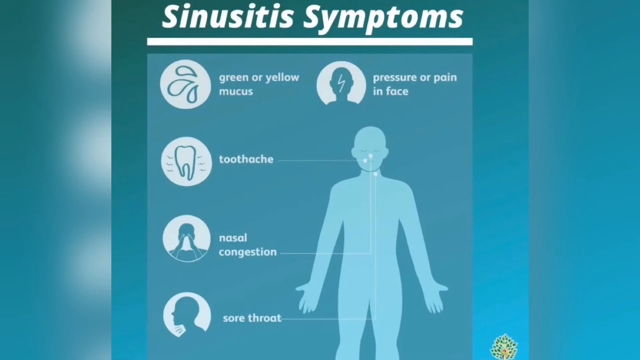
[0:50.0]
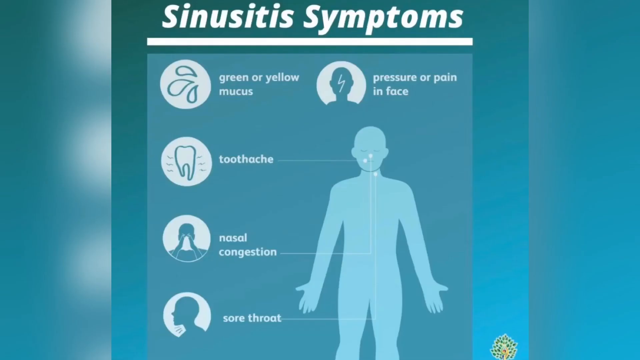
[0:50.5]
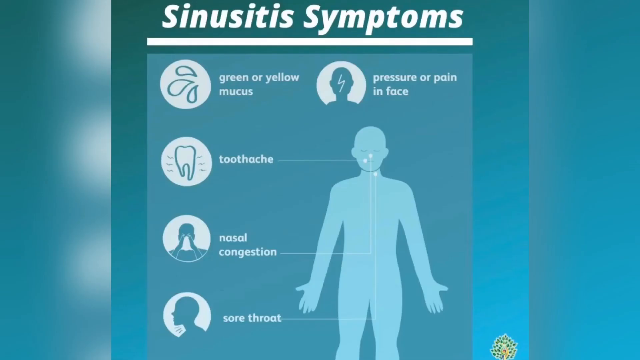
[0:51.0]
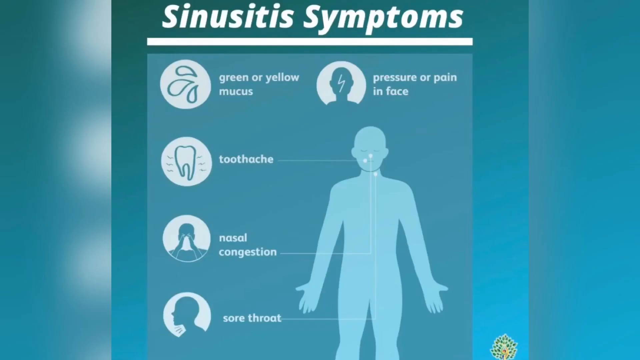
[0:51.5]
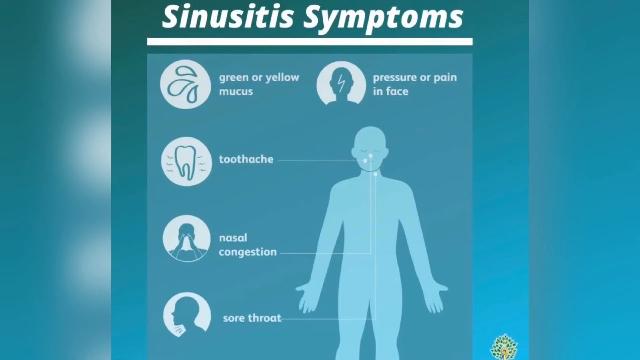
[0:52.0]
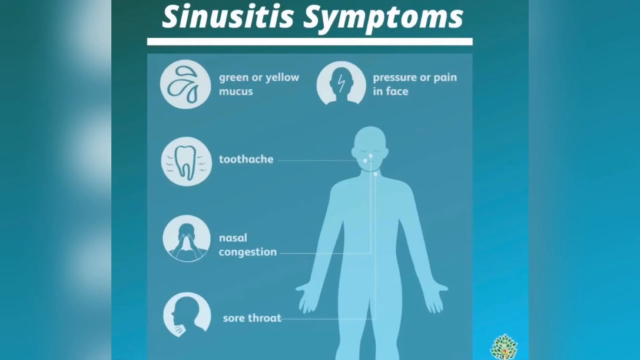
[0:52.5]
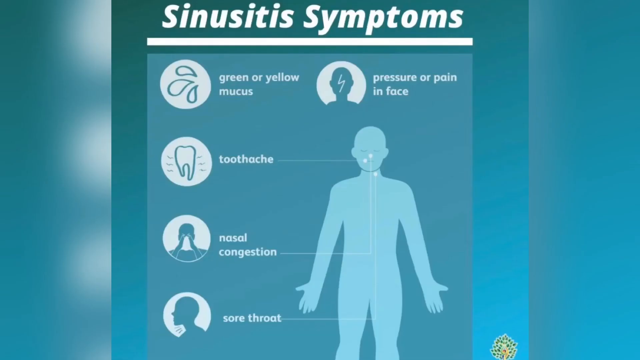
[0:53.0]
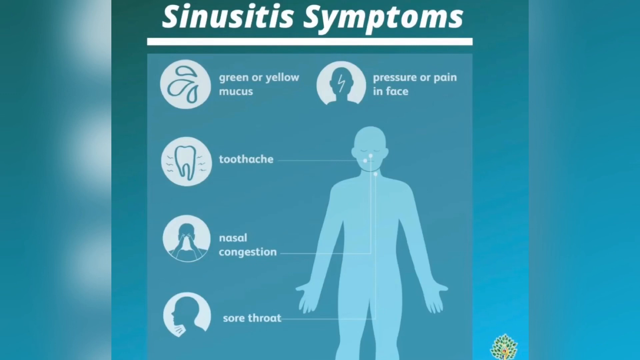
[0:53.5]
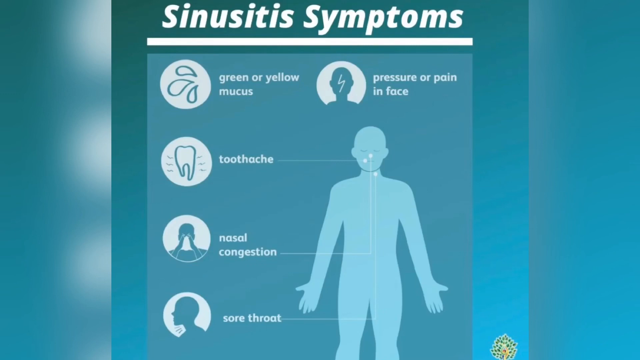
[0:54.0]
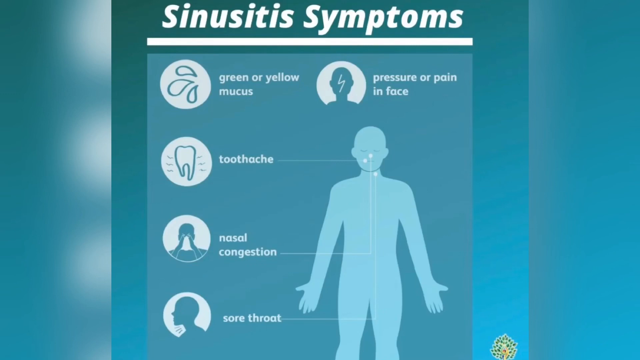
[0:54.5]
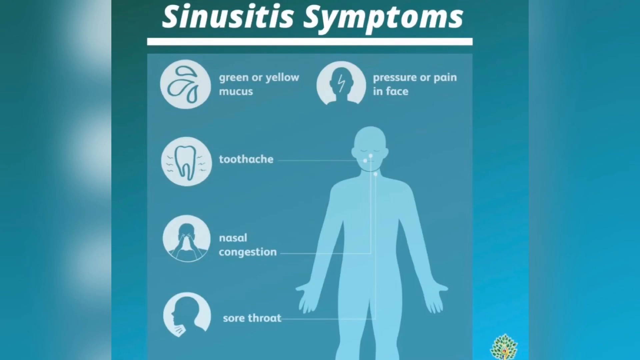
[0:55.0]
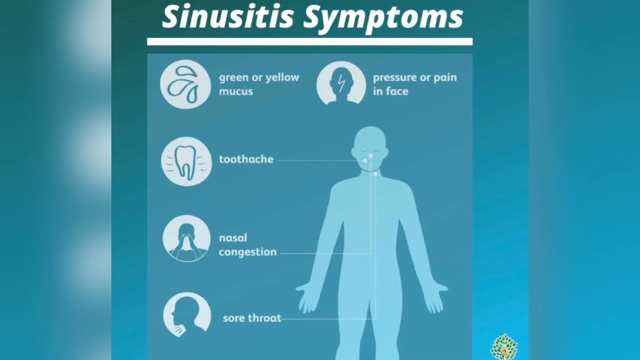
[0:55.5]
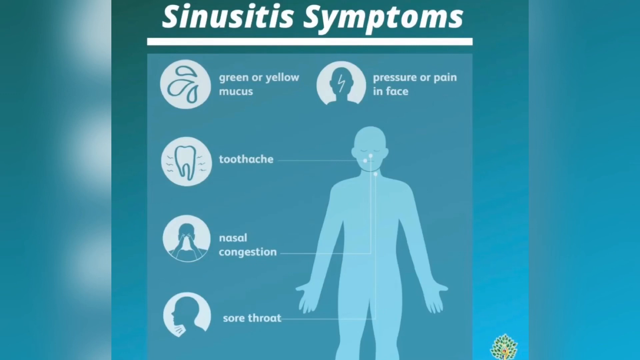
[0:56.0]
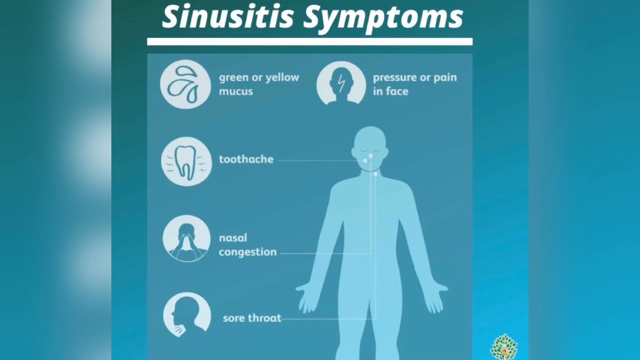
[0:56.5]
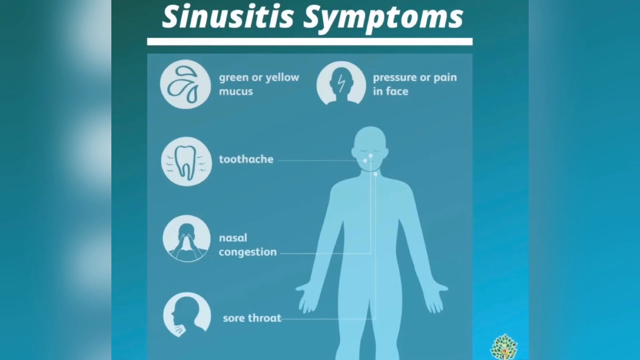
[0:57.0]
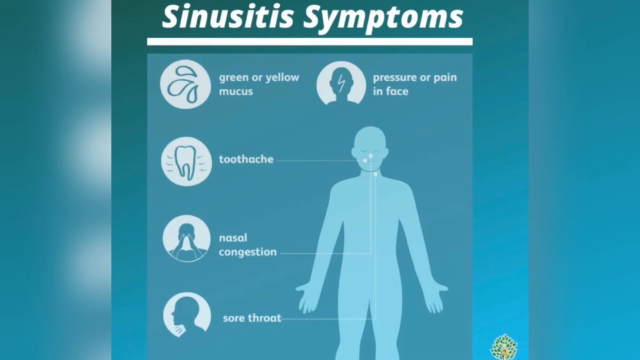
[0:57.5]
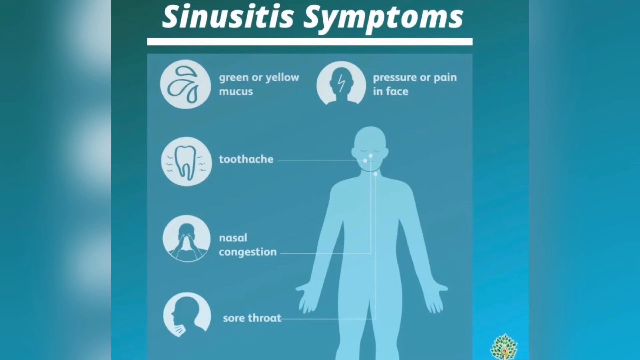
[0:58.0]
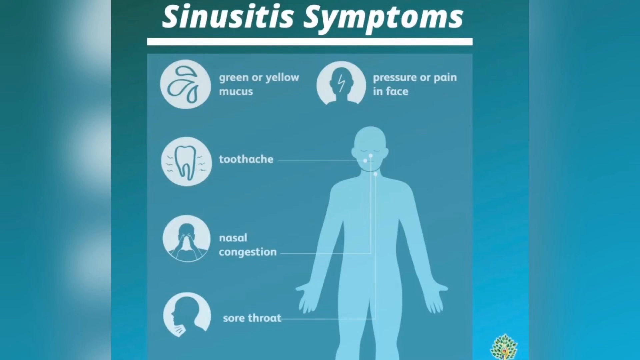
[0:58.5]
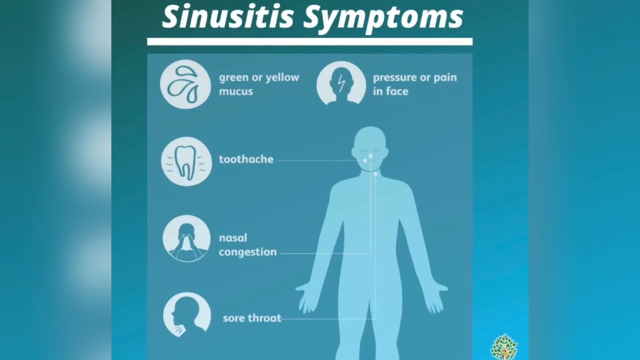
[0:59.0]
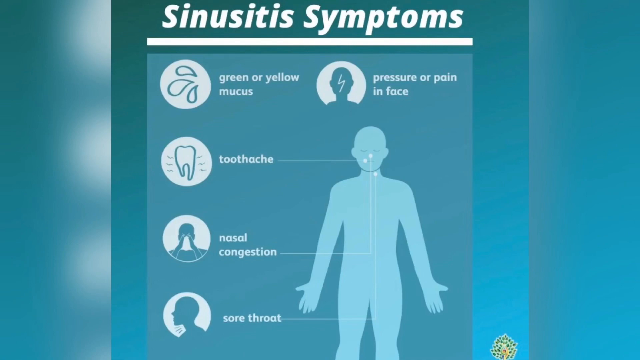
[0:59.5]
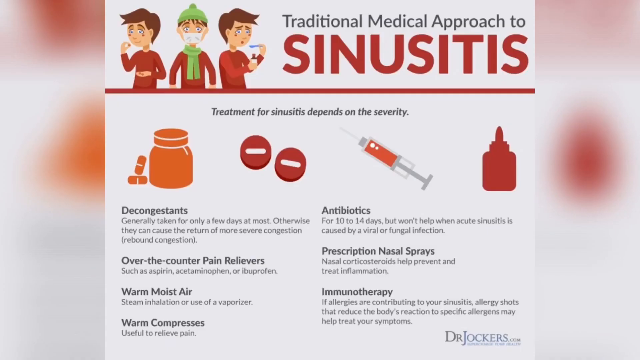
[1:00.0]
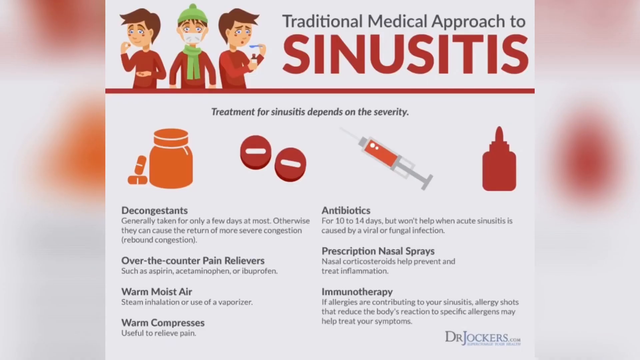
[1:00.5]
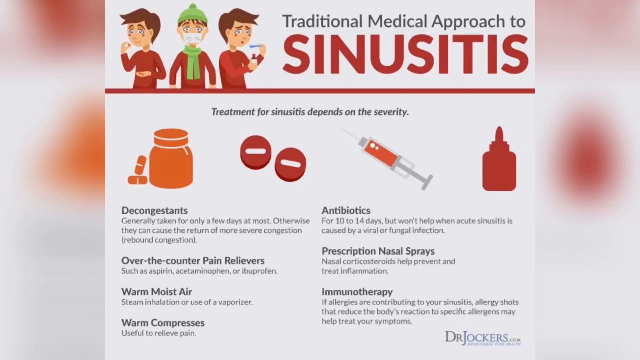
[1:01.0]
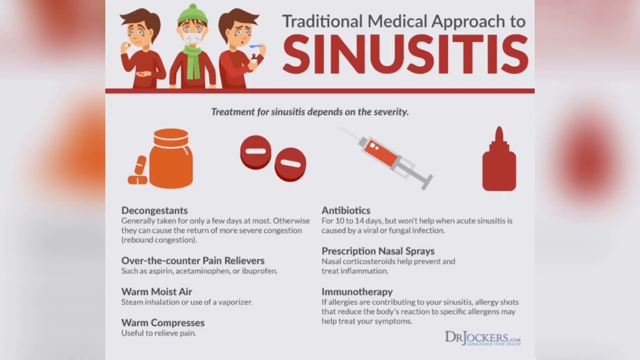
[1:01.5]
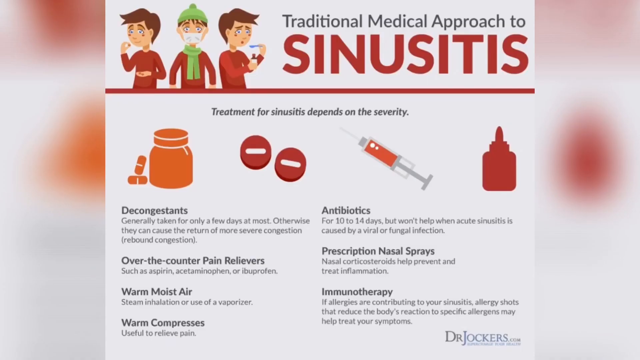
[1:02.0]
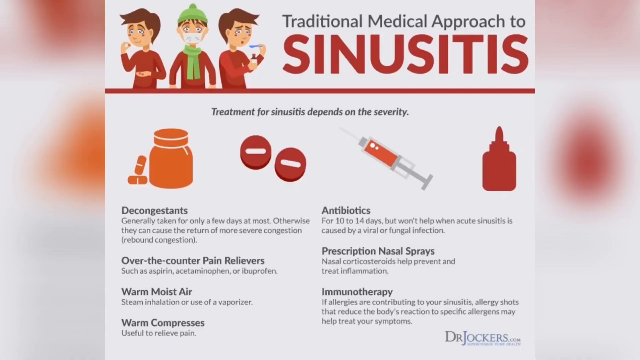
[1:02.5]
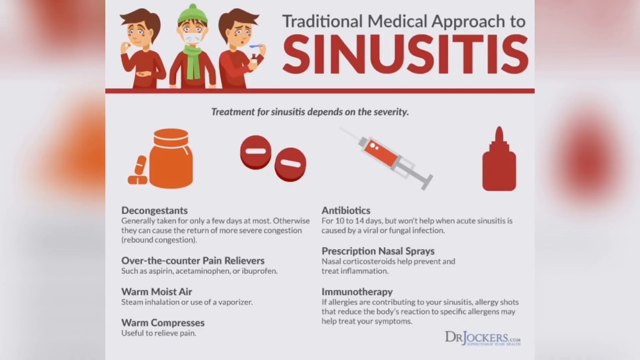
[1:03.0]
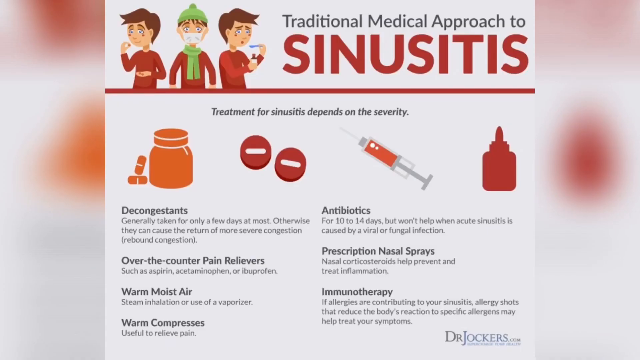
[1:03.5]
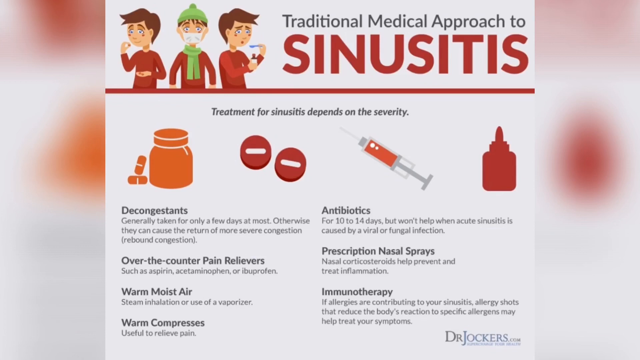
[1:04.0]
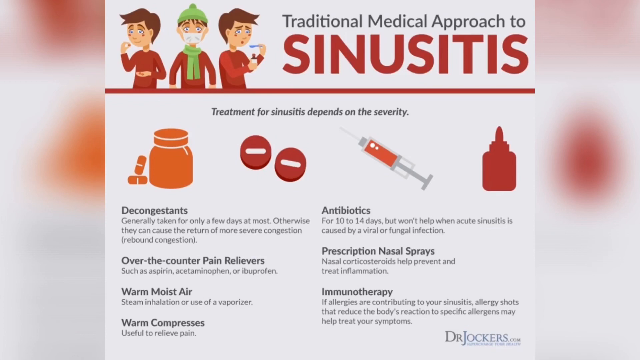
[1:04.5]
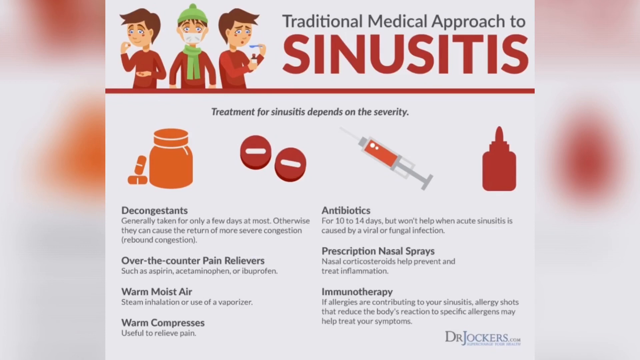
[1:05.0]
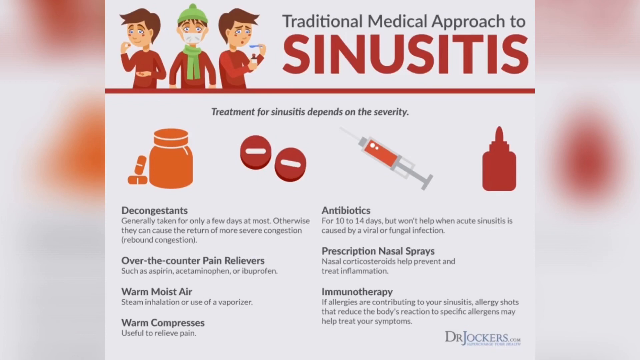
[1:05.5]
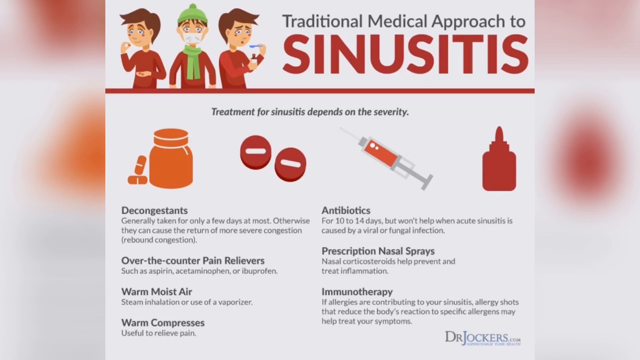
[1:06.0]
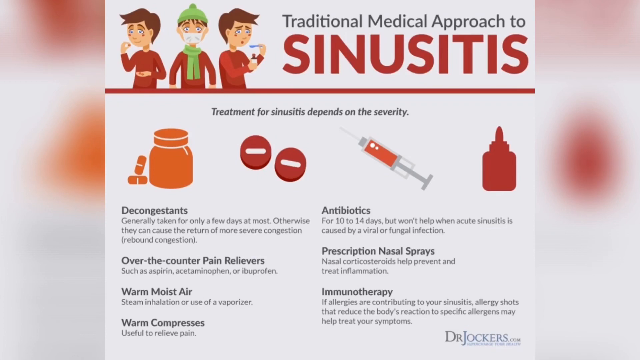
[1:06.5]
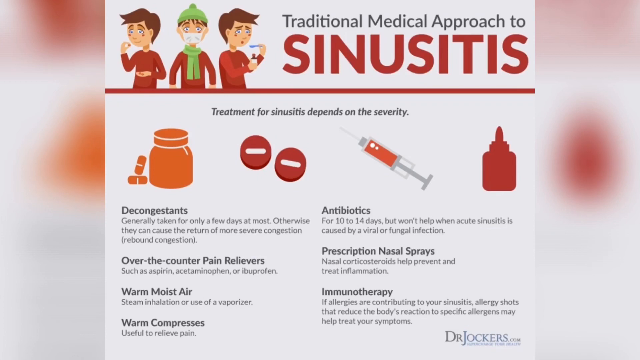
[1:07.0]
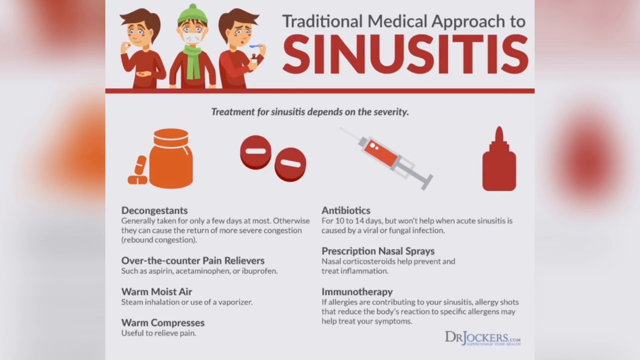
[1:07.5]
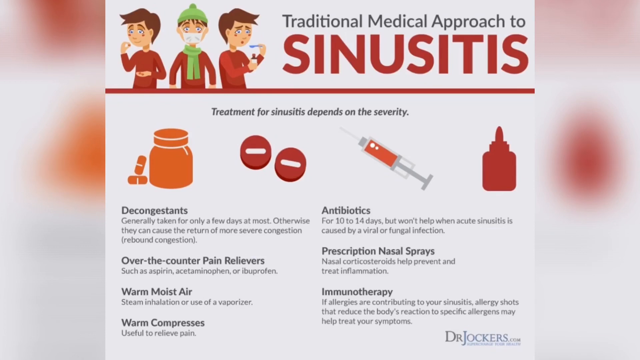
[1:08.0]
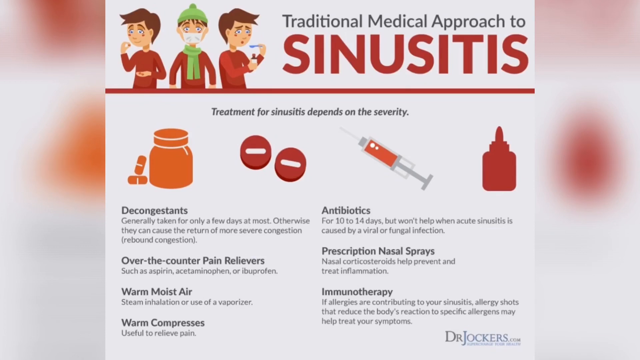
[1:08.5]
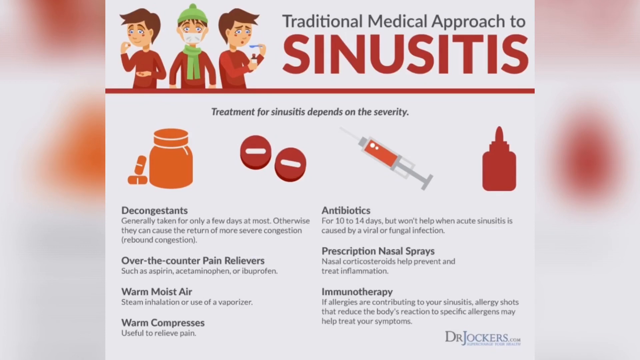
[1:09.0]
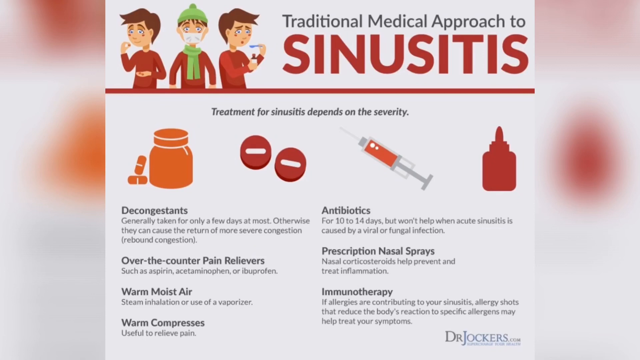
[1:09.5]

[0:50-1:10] A computer-generated image is set on a blue background. At the top, white lettering on a bluish-green background reads "sinusitis symptoms". Below that are five symptoms: green or yellow mucus, with a picture of three drops of water or liquid; a toothache, with a picture of a tooth with little squiggly lines going away from it; nasal congestion, with a picture of someone blowing their nose; a sore throat, showing someone's side profile with an achy throat; and pressure or pain in face, showing the outline of someone's head with lightning going through it. Down below is a drawing of a human, and three of the symptoms have lines drawn to their locations: the toothache to the mouth, the nasal congestion to the nose, and the sore throat to the throat. Another image is then shown, labelled "traditional medical approach to sinusitis", with three sick males drawn on the left and details below in text.